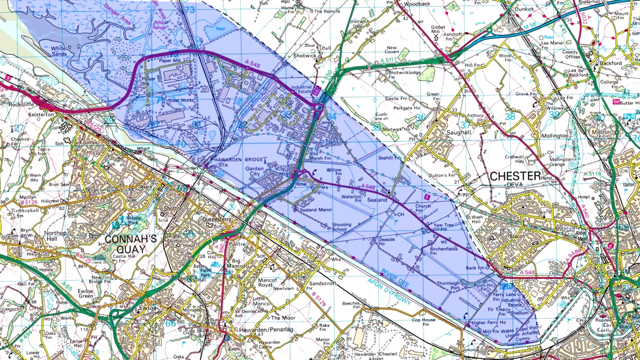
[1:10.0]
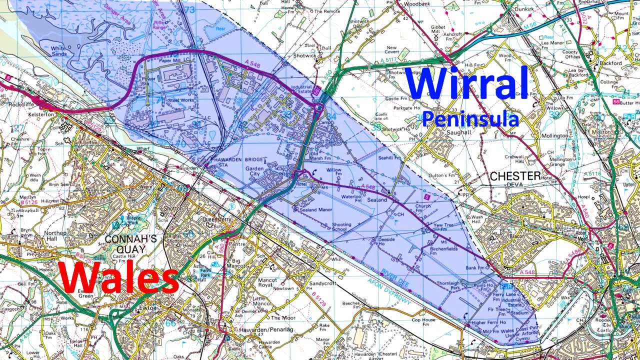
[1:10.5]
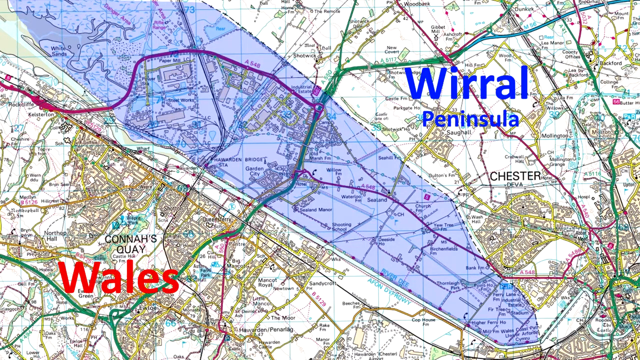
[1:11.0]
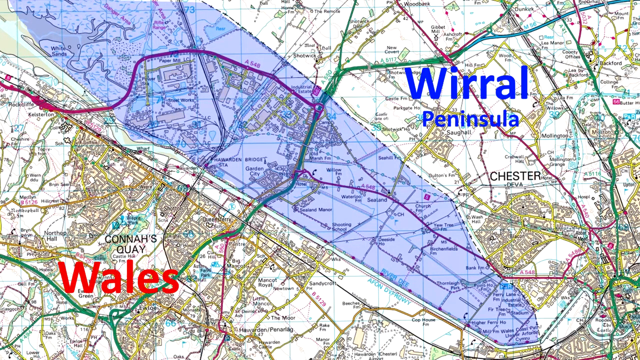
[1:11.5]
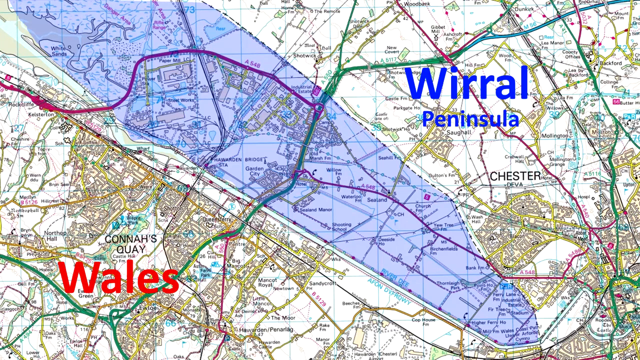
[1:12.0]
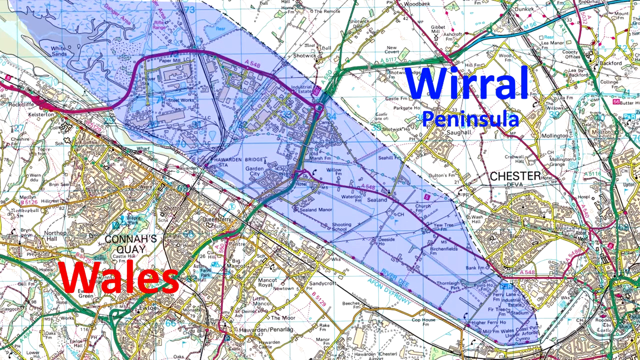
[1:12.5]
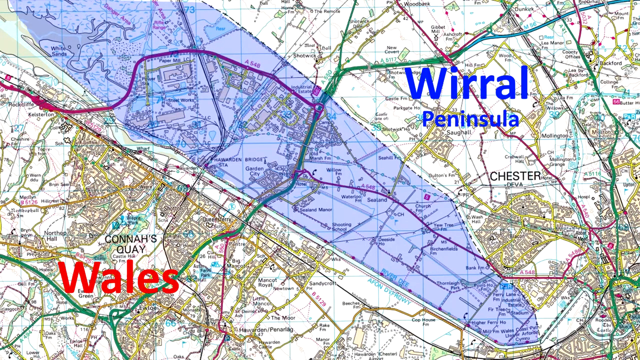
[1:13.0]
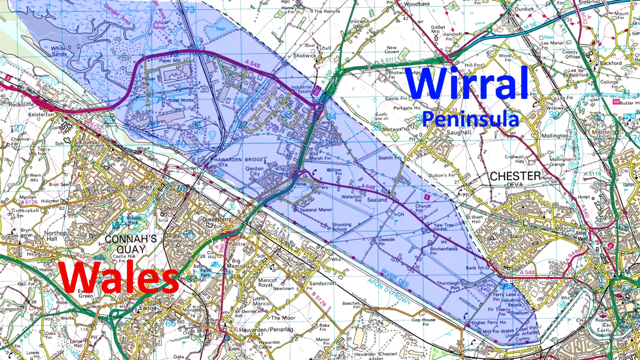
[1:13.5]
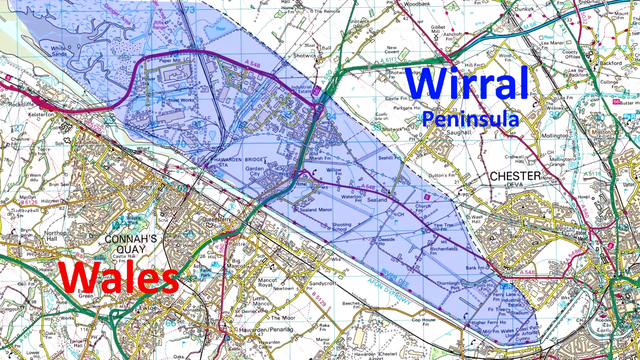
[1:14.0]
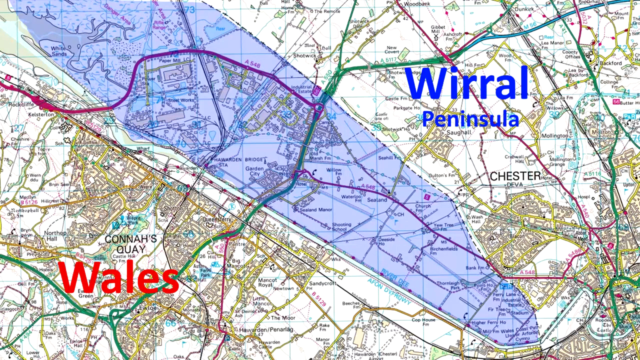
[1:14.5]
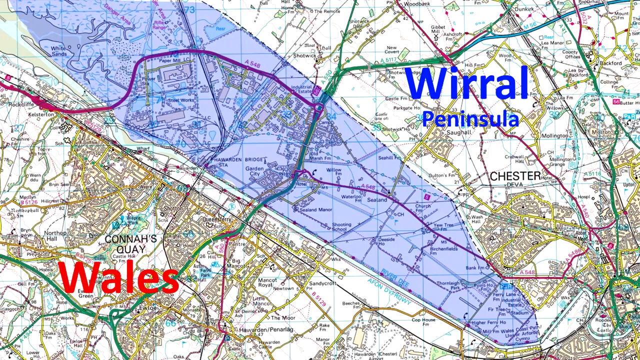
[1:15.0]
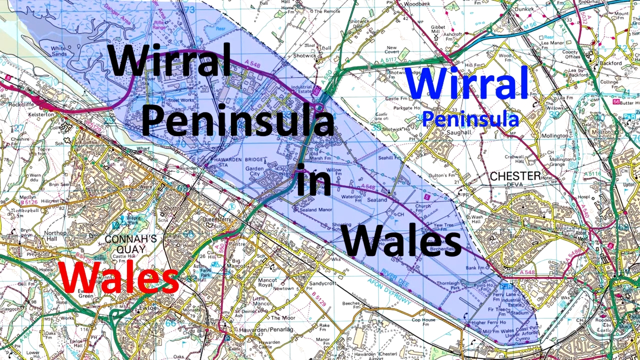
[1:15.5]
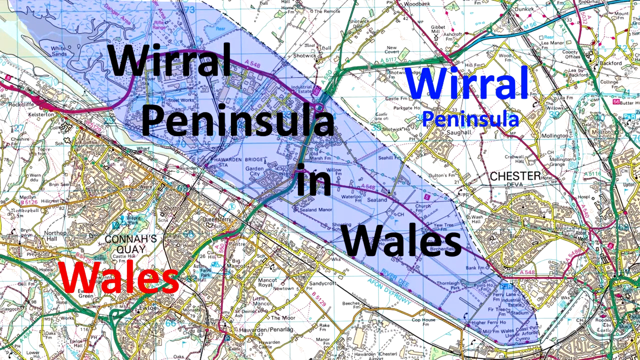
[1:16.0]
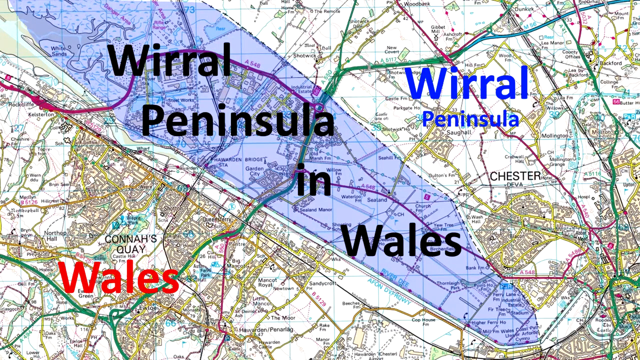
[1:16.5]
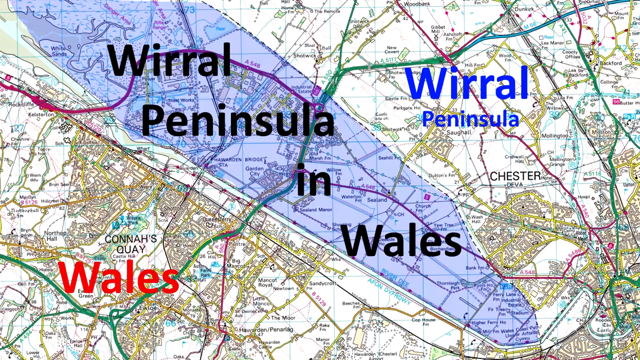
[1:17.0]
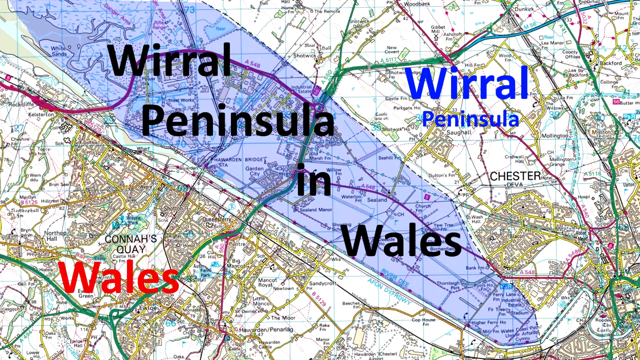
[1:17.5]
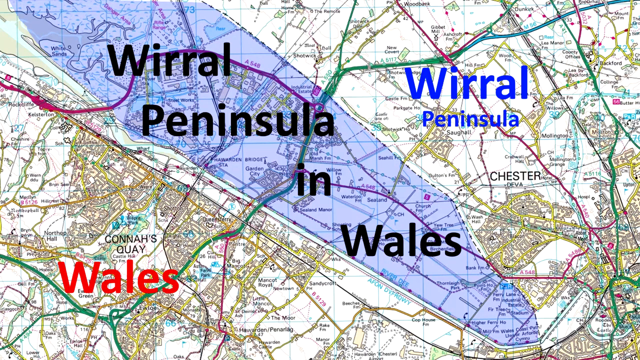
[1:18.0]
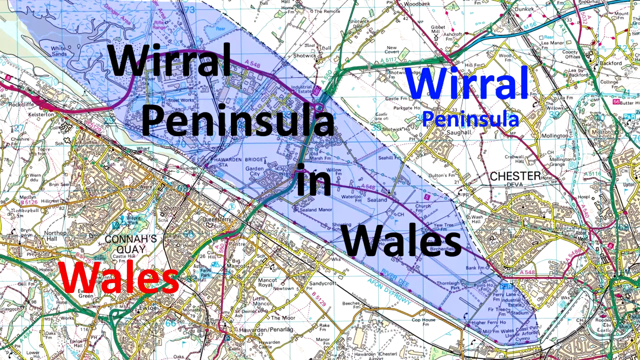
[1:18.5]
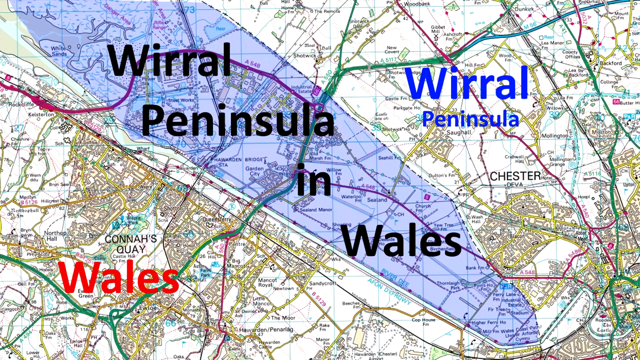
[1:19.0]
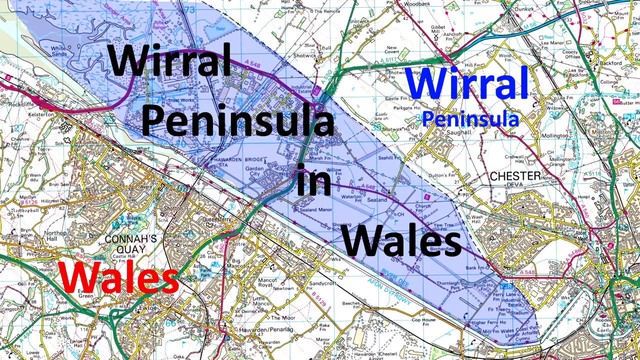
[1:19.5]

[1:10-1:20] The still, very detailed close-up map of Chester and Connors Quay continues. Two main headings now appear: the Wirral Peninsula, to the north of Chester, and Wales, to the left of Connors Quay. An area is shaded in blue. As the image stays on screen, the blue area gets its own label, "Wirral Peninsula in Wales". Chester is to the right of the blue area and Connors Quay to the left.